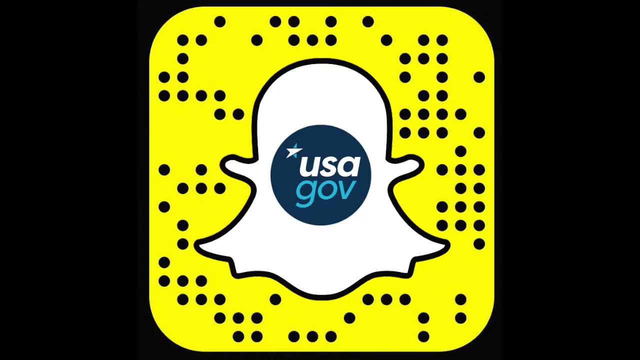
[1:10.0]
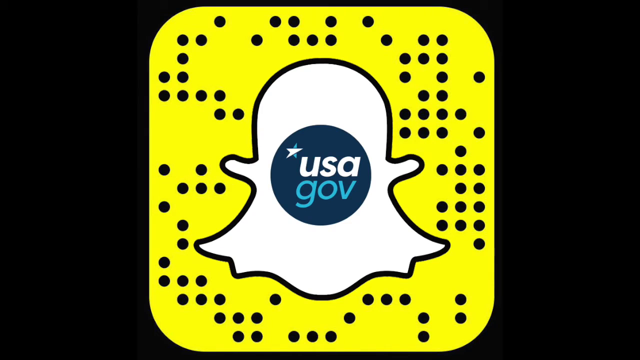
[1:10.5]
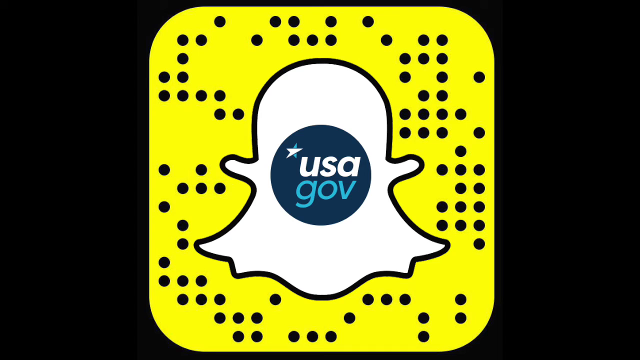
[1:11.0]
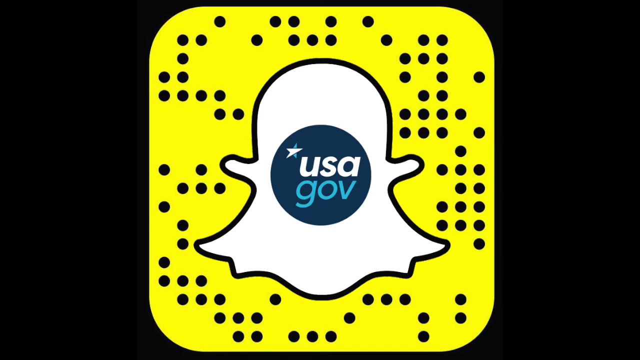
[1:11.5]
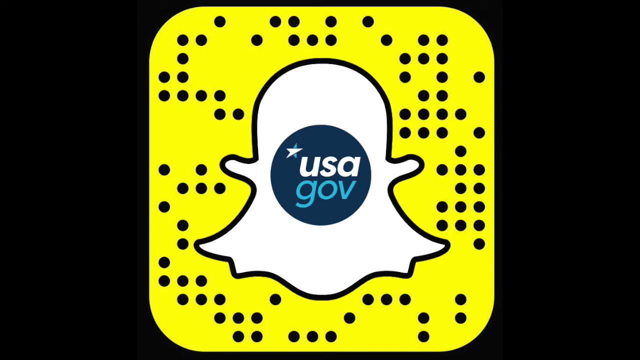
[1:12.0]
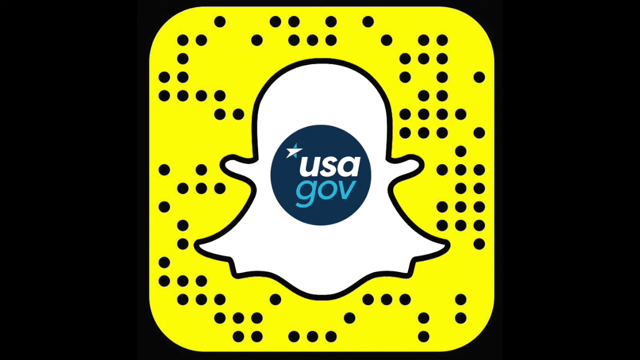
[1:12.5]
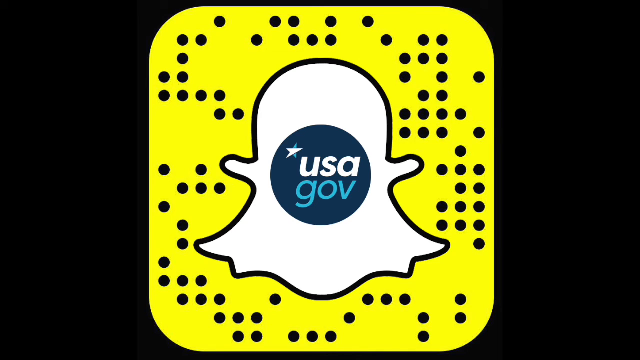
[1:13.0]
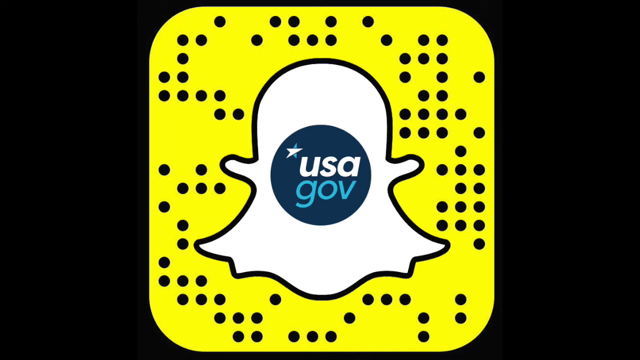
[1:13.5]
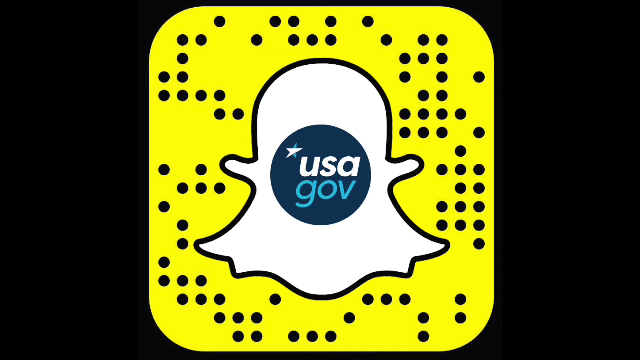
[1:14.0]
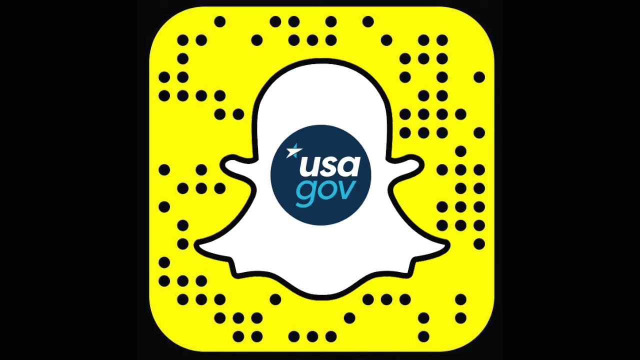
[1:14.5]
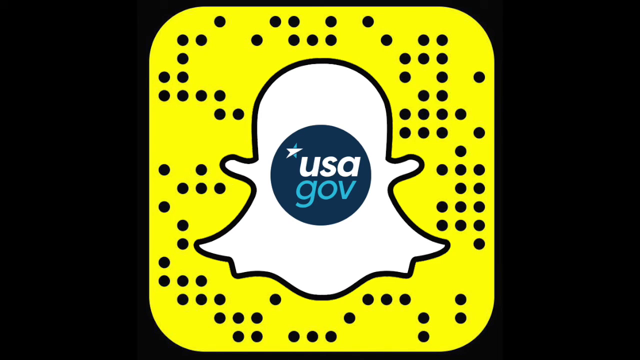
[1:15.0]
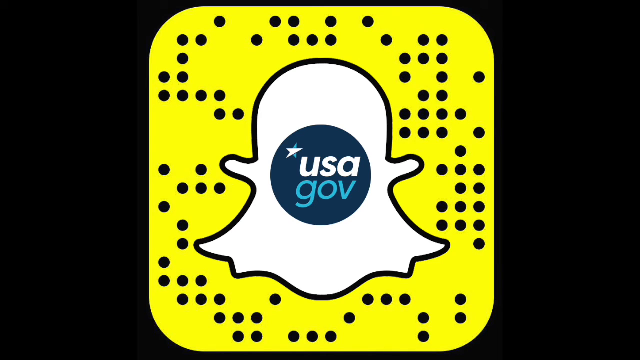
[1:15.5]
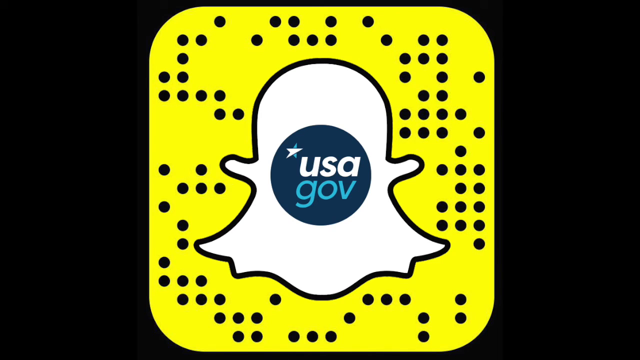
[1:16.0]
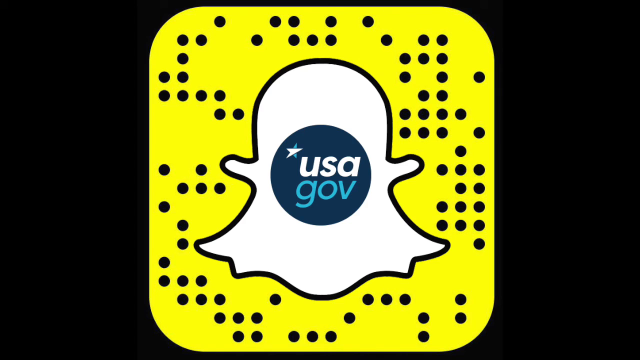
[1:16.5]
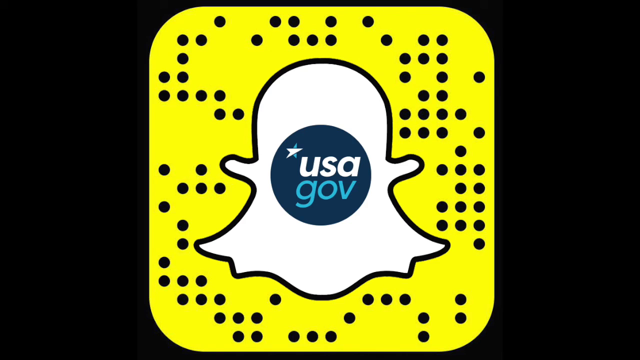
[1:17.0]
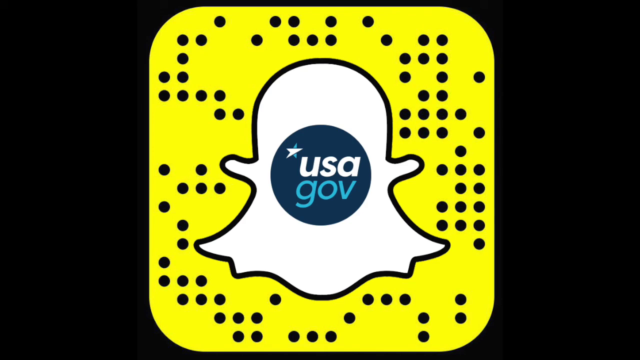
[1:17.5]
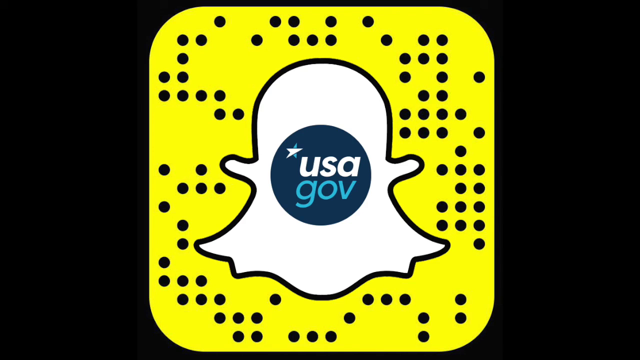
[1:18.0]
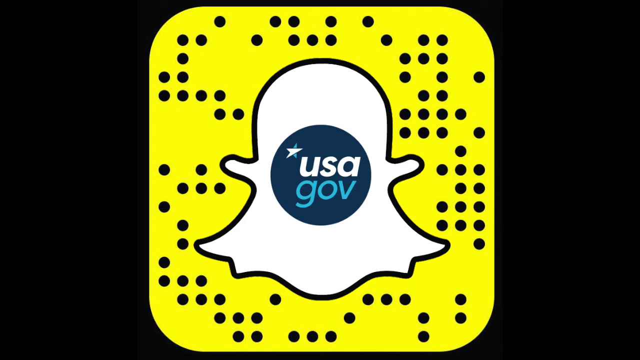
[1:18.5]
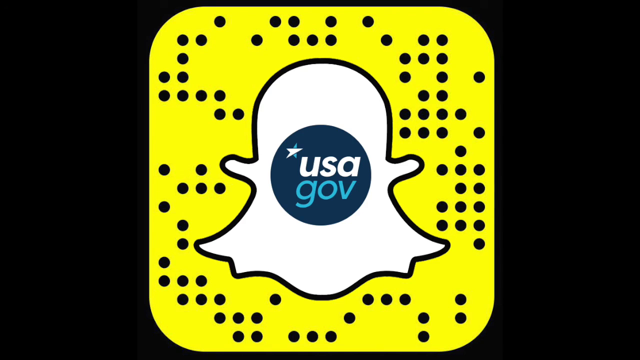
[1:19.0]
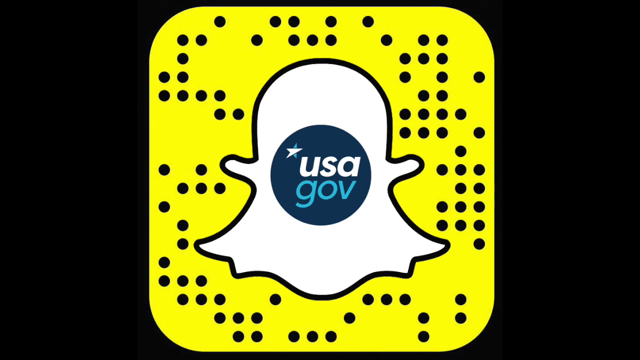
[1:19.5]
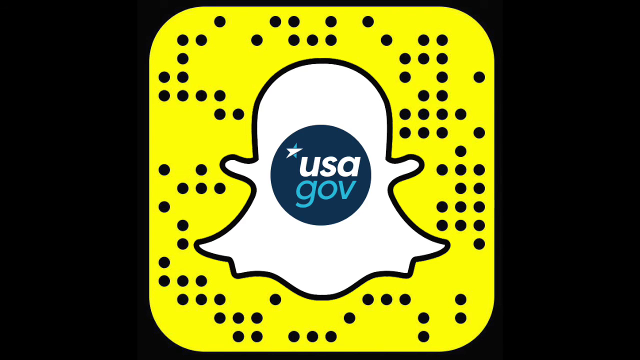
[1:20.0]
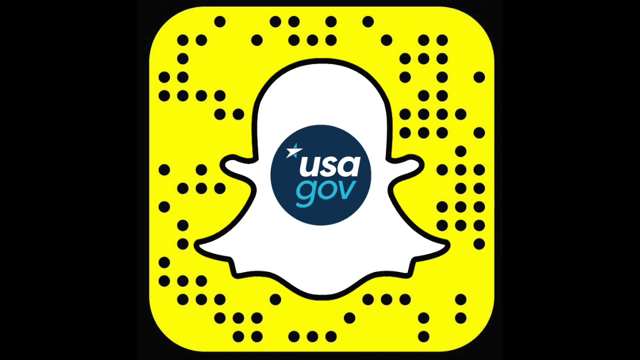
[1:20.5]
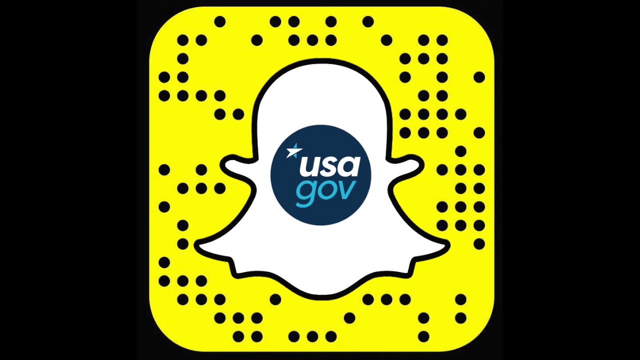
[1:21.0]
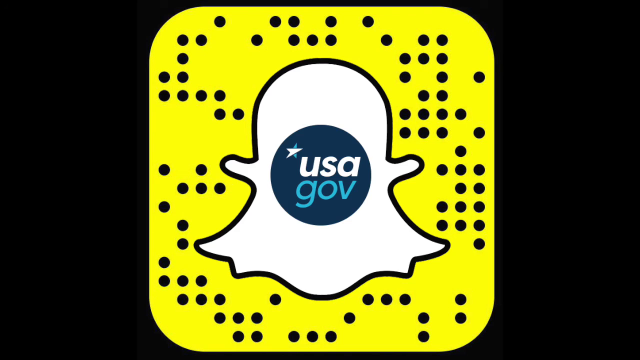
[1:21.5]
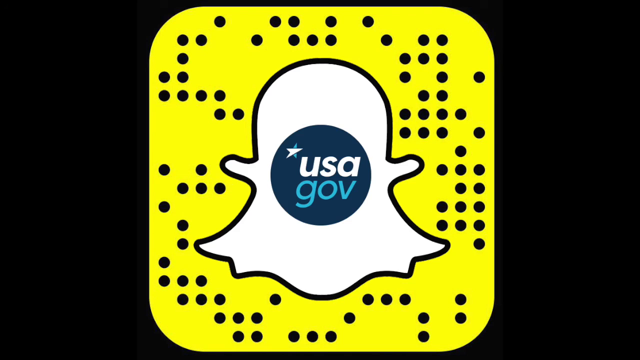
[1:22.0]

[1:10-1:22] The Snapchat logo appears with its center filled in by a dark blue circle. In the top left corner of the circle area is a five-point star: three of its points, the left two and the top right one, are white, making them look like a triangle pointing to the top right, and the other two points below are blue. The main part of the circle shows the word "USAGov," with "USA" in white and "gov" in blue. Nothing changes during this part.